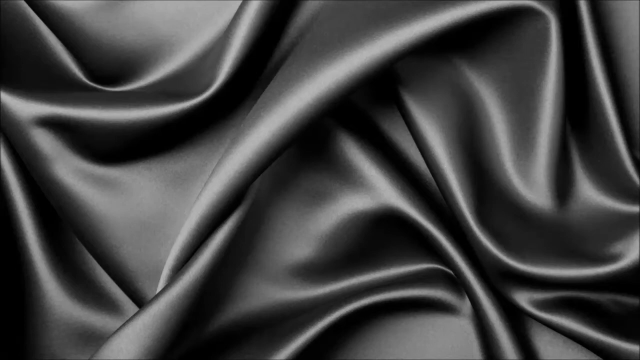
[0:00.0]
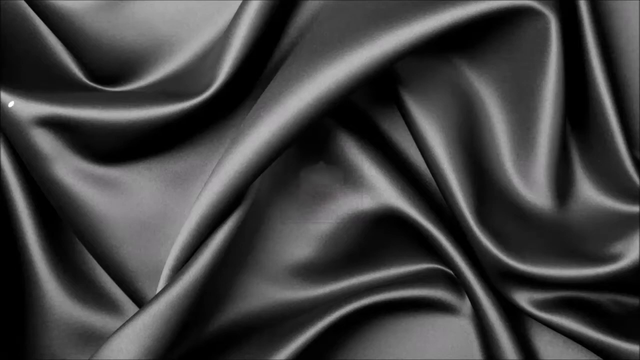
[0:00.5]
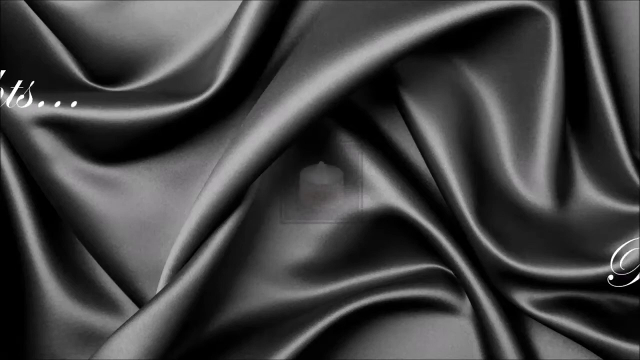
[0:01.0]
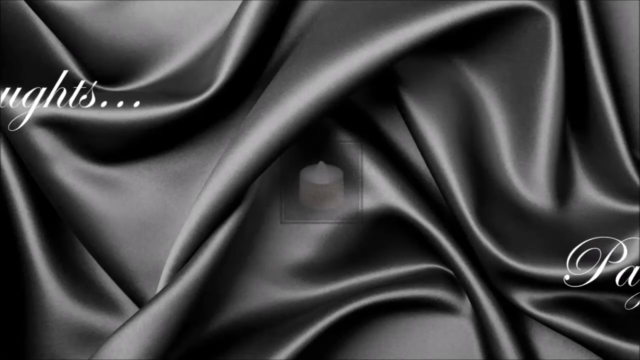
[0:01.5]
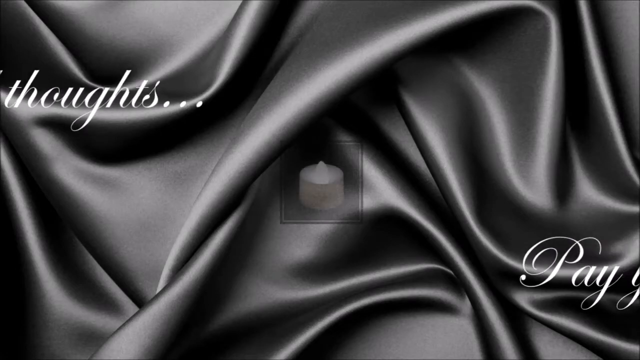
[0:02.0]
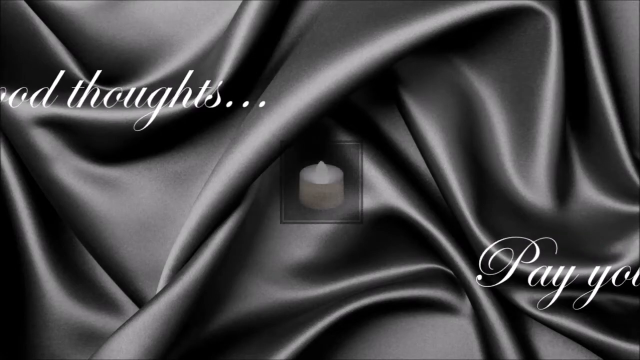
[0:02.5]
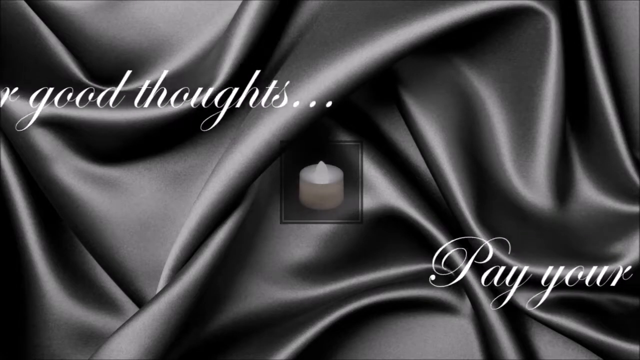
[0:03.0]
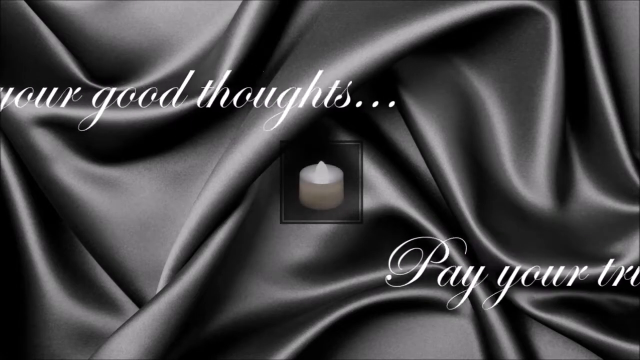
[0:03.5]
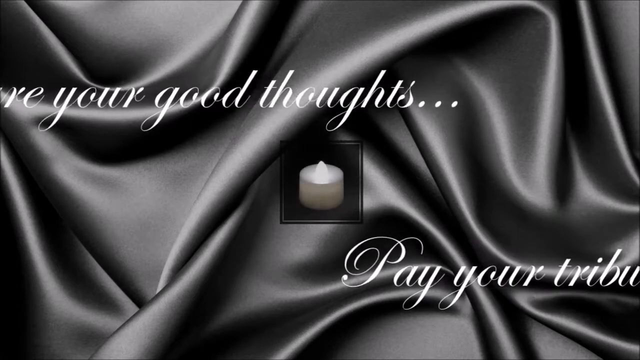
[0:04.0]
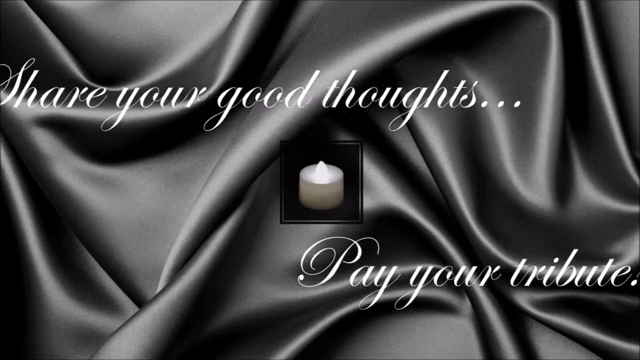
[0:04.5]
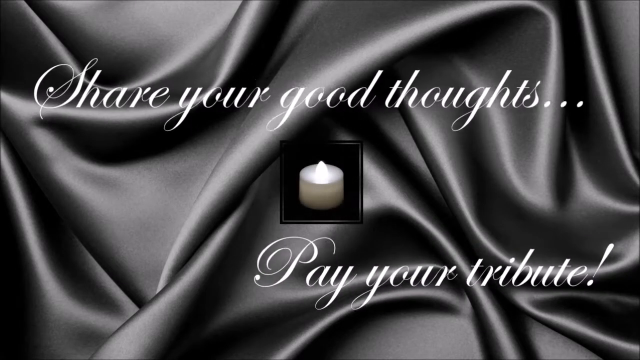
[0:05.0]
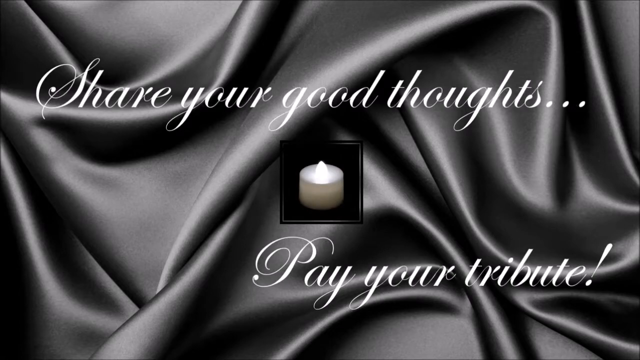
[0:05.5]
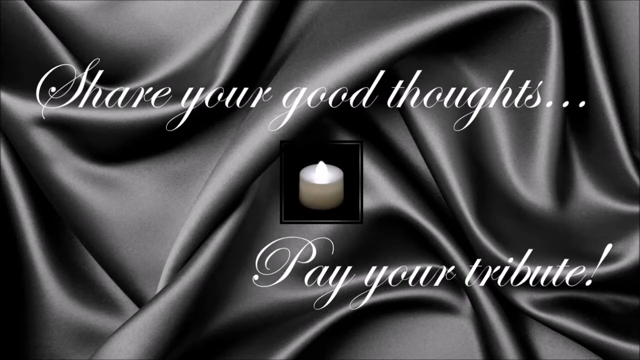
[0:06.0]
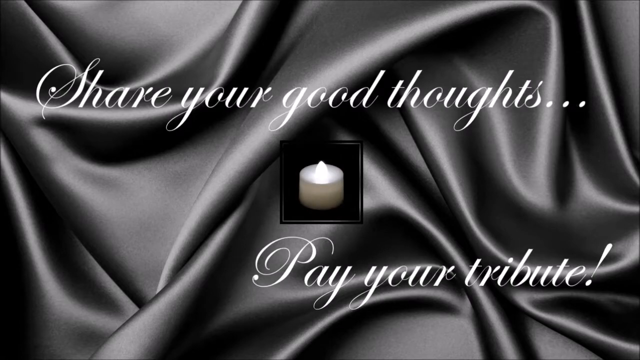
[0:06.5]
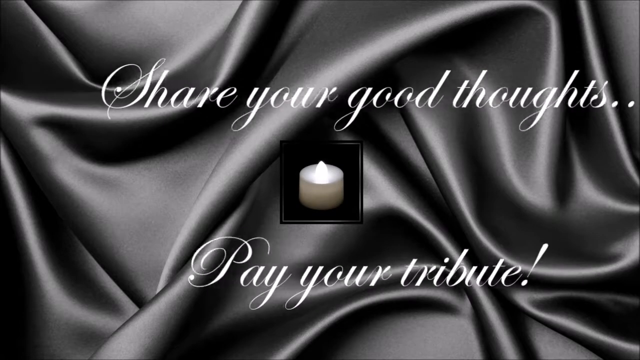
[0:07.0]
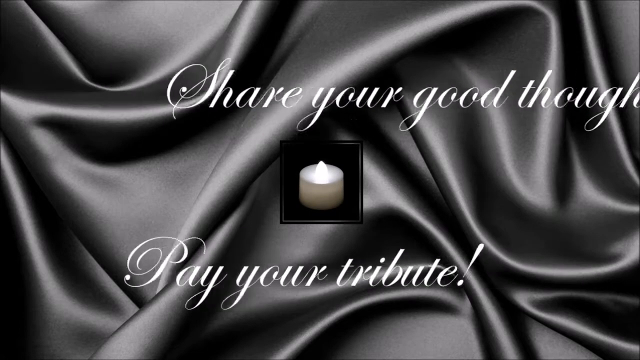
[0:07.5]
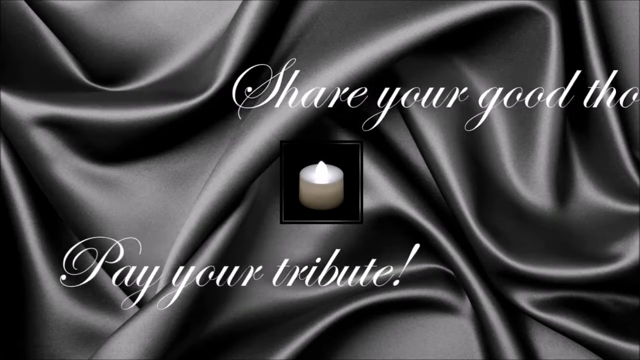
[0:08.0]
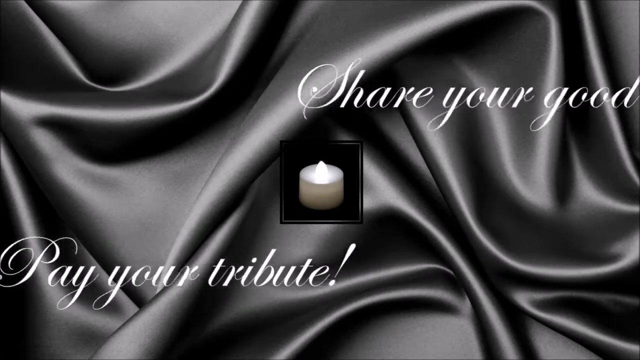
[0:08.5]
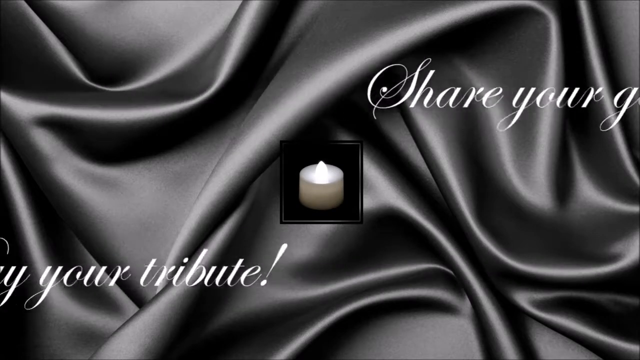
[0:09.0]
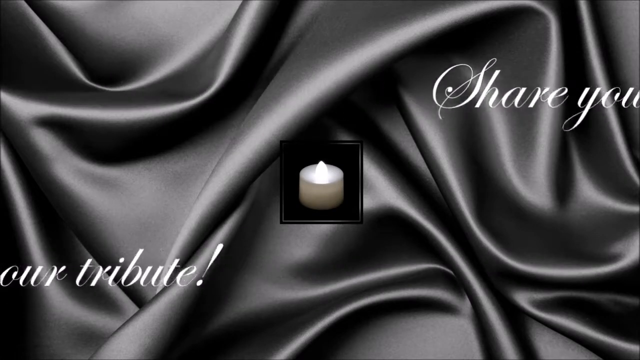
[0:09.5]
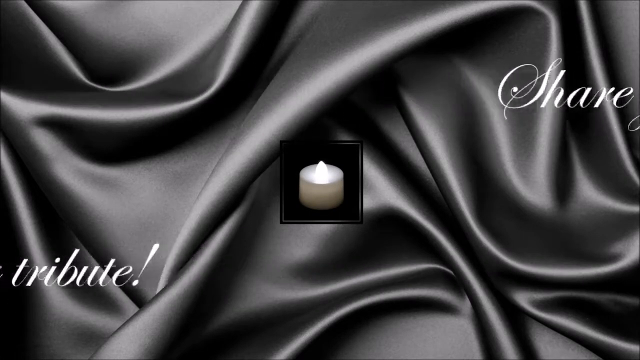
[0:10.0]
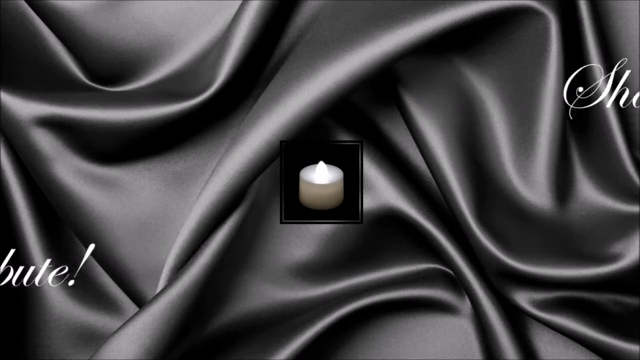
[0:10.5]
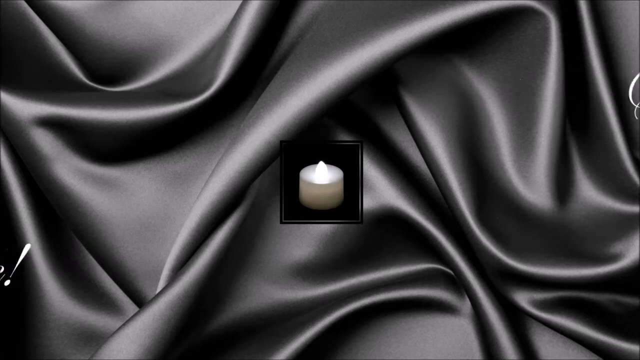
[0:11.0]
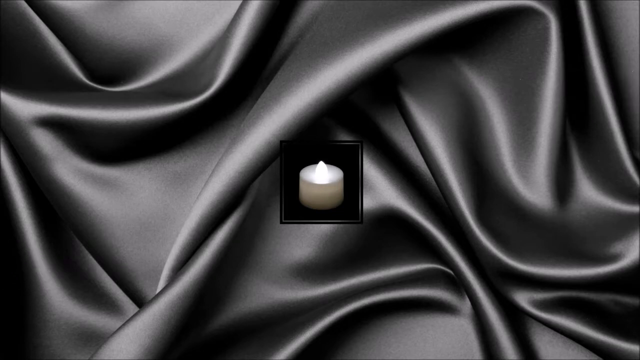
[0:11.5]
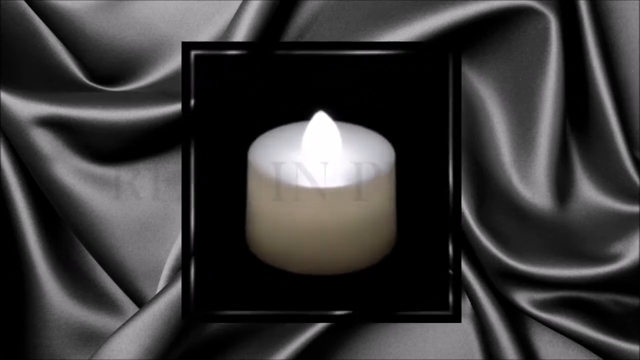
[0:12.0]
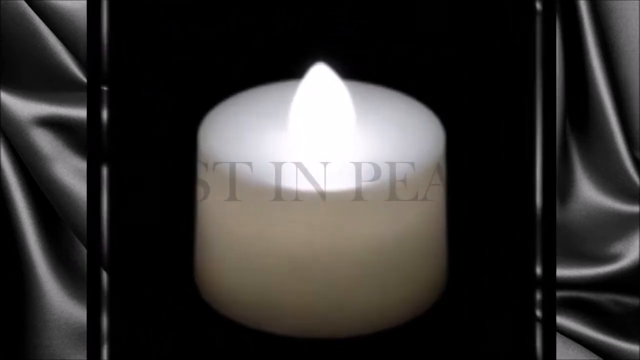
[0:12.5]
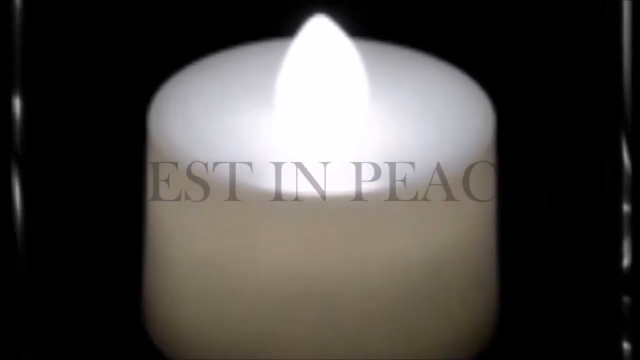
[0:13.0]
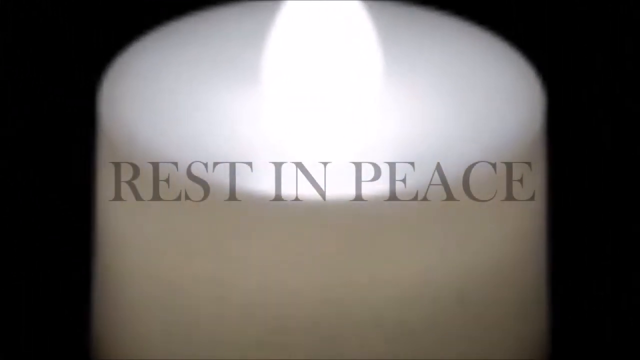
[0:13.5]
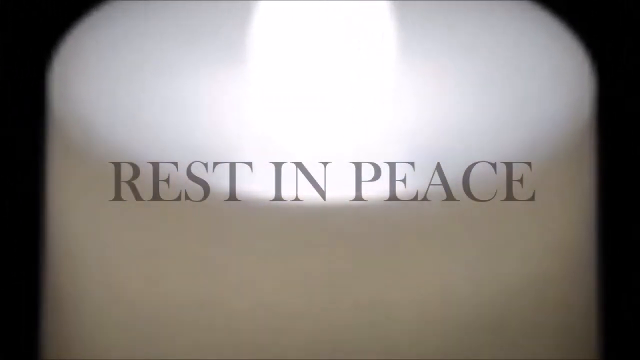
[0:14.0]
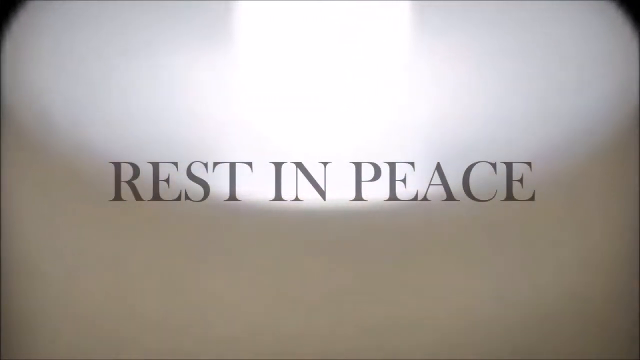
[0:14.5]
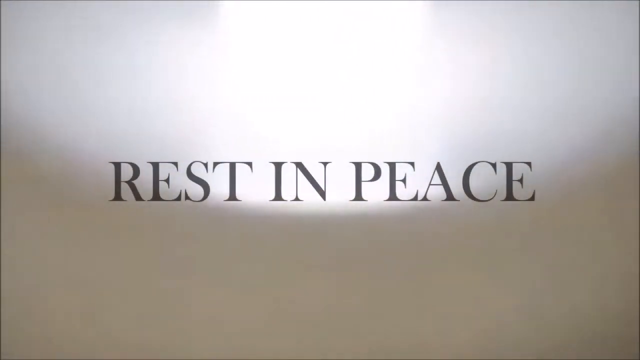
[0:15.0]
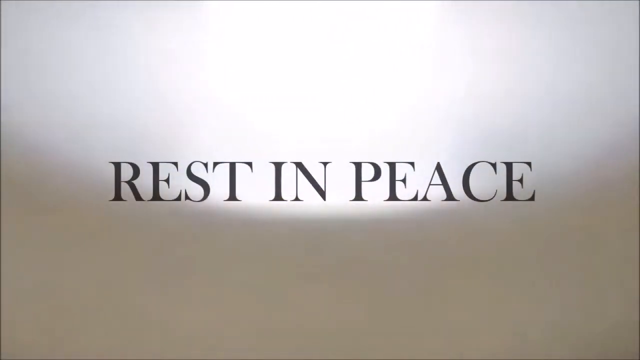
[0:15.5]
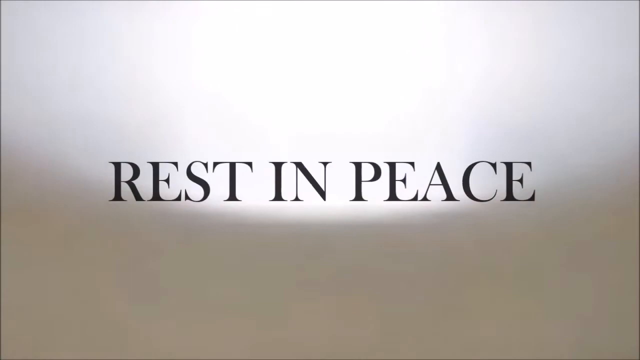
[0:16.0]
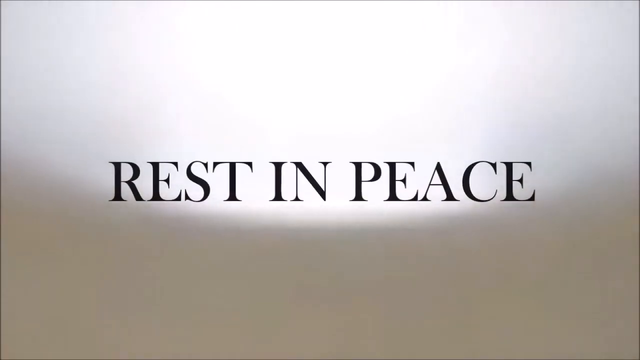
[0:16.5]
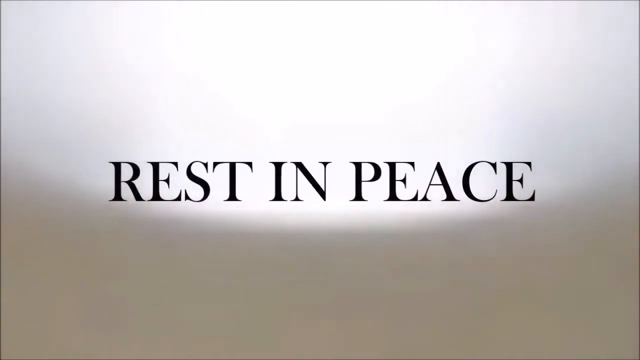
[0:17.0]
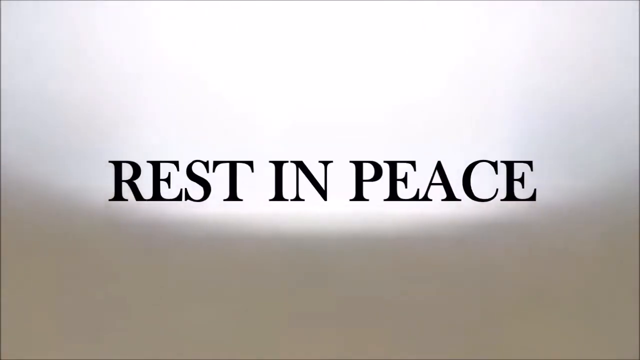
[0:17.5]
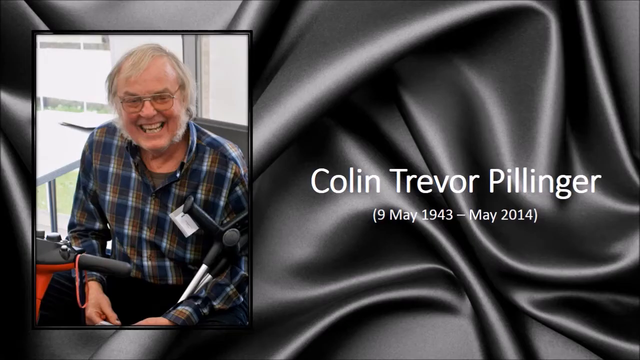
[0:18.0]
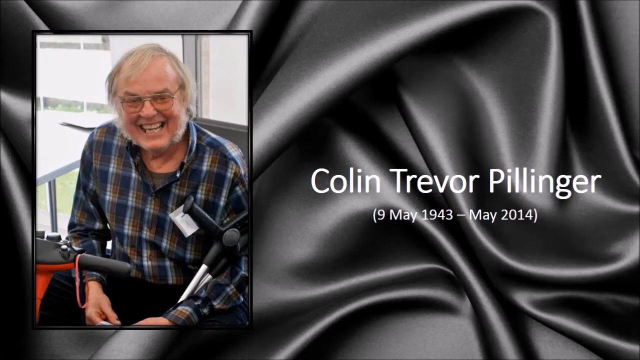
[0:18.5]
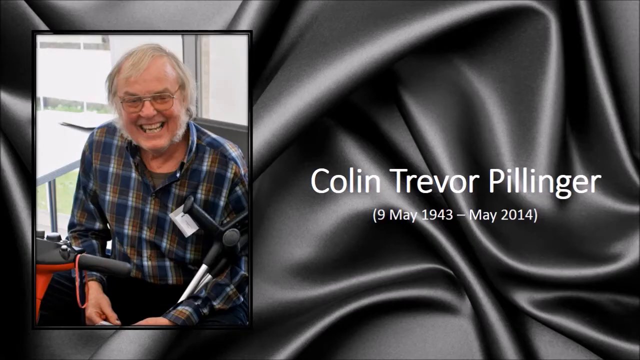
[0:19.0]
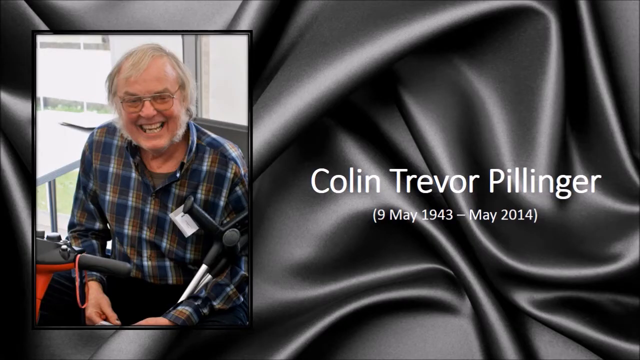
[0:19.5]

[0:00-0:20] The entire screen shows black silk as the background, and cursive text about sharing good thoughts and paying tribute pans across the screen from the side. A white candle image then appears in the centre and grows larger, becoming the main focus. The words "rest in peace" then appear in bold capital letters. This is followed by a photograph of a man, with his name, "Colin Trevor Pillinger", and the dates "9th of May 1943 to May 2014". Everything remains on the black silk background, and the font is white. There is just one picture of Colin Trevor Pillinger: he wears a blue, white and yellow-brown checked shirt and glasses, has grey hair and a beard, and smiles towards the camera. He appears to be sat in a mobility scooter with crutches under his arm.